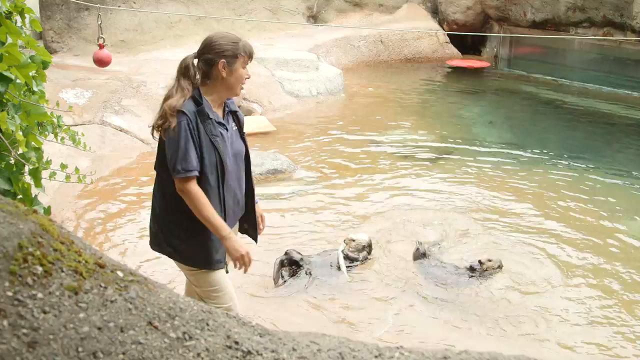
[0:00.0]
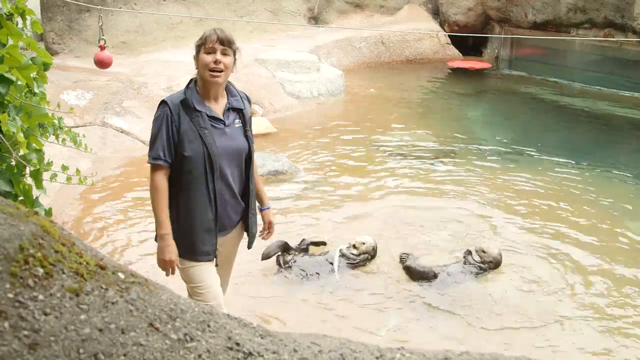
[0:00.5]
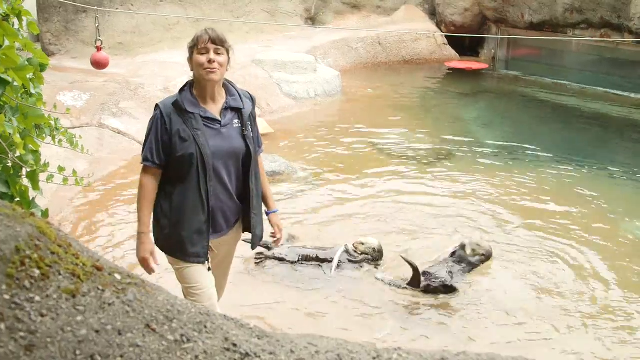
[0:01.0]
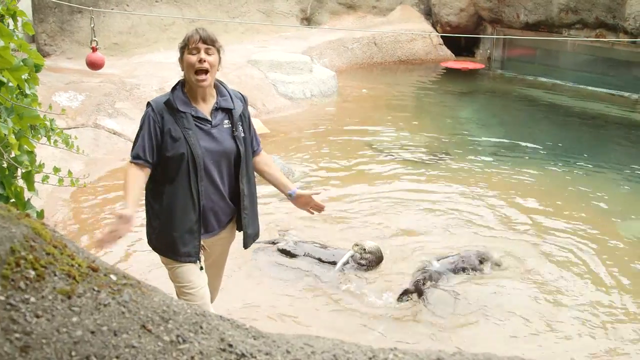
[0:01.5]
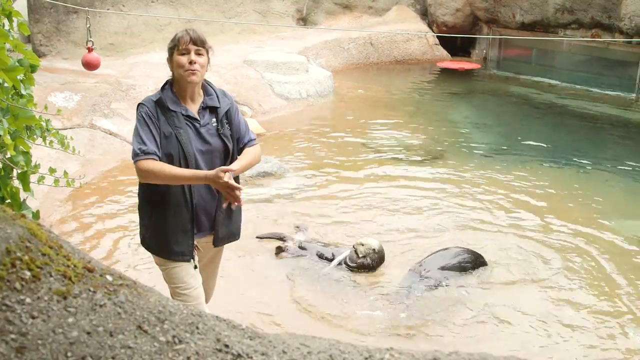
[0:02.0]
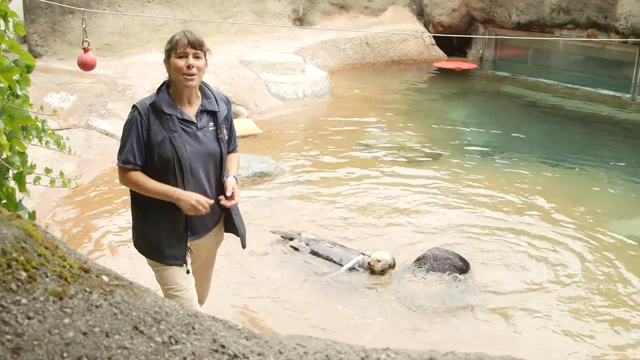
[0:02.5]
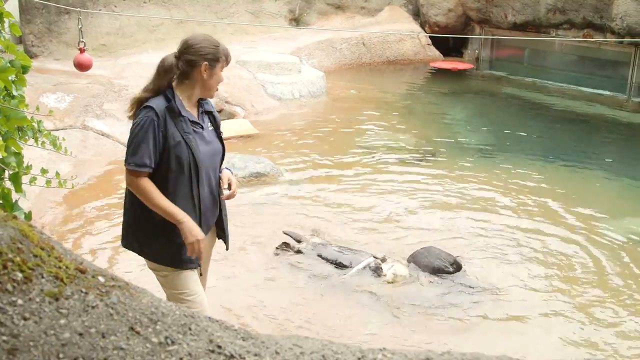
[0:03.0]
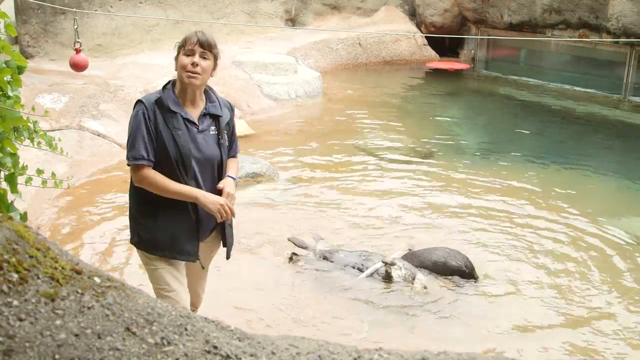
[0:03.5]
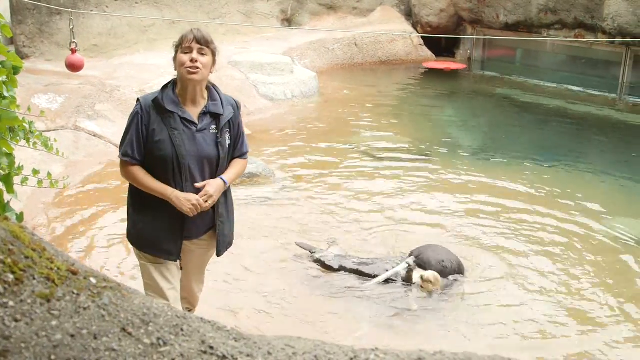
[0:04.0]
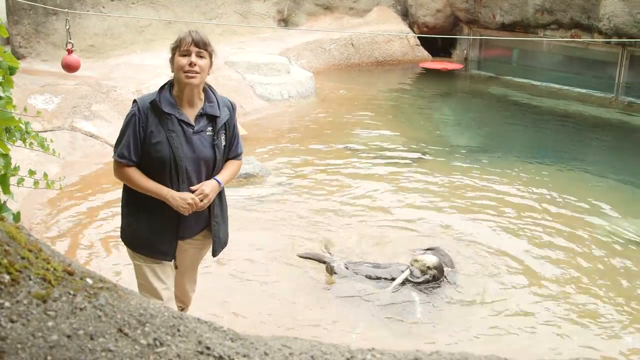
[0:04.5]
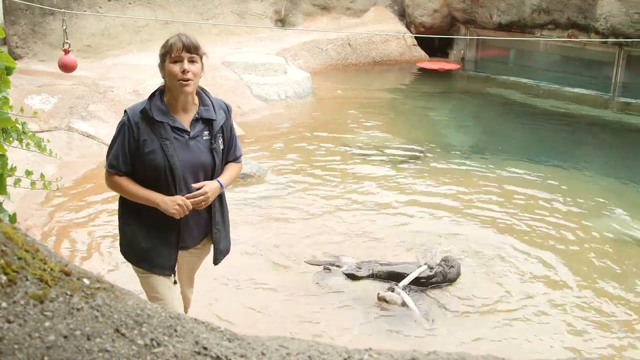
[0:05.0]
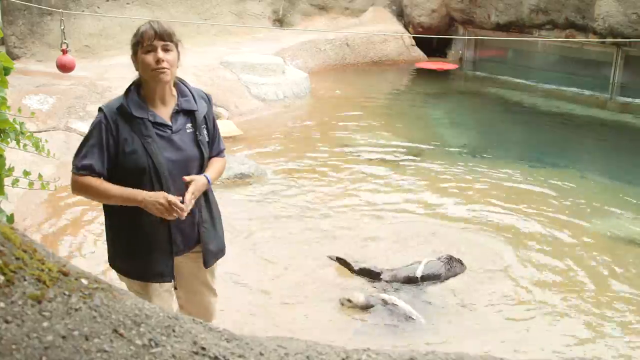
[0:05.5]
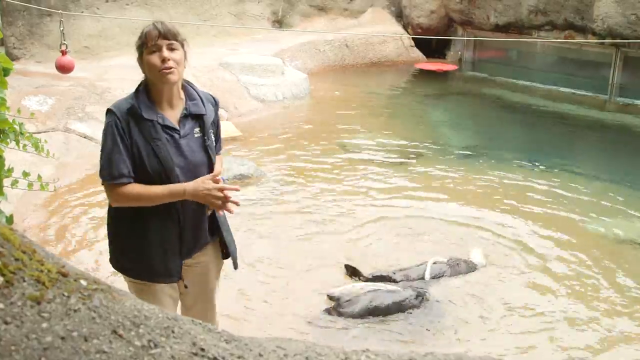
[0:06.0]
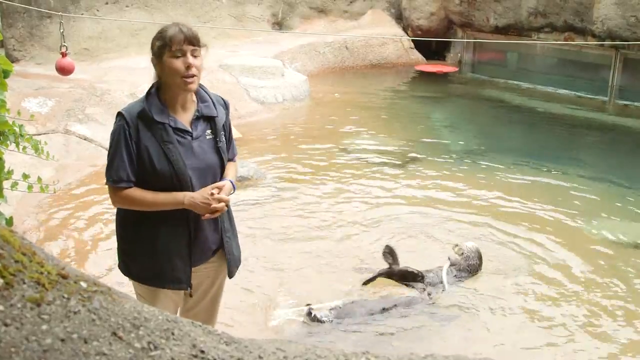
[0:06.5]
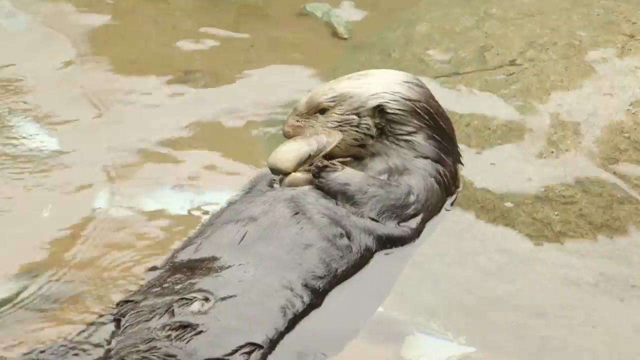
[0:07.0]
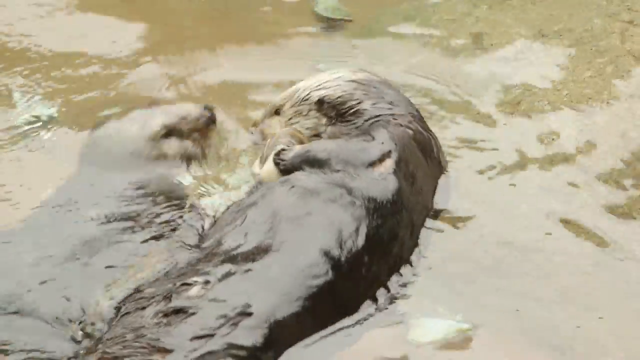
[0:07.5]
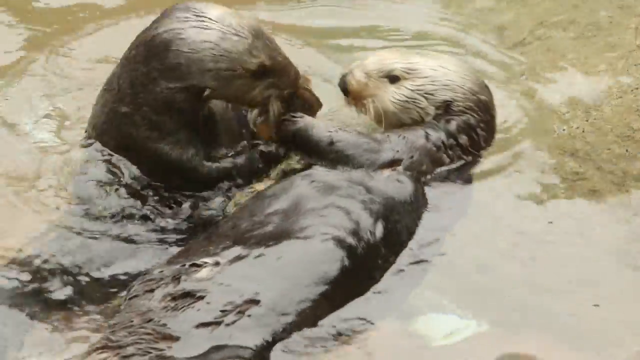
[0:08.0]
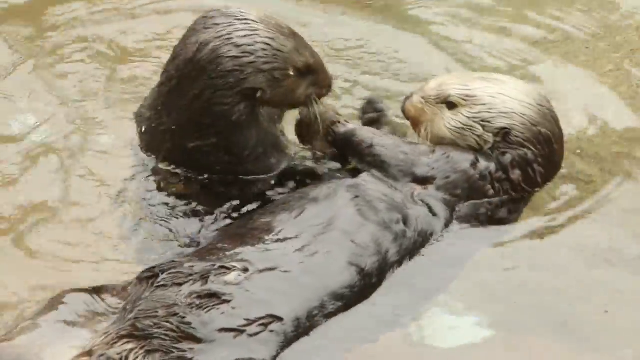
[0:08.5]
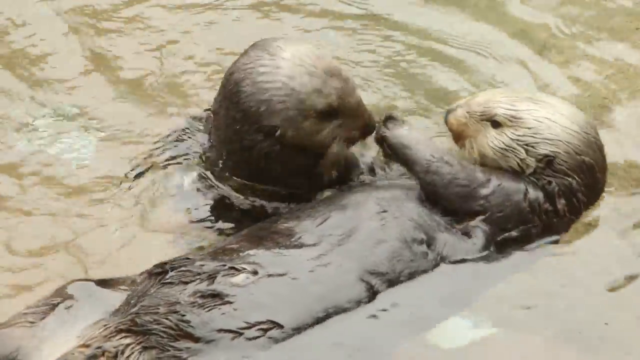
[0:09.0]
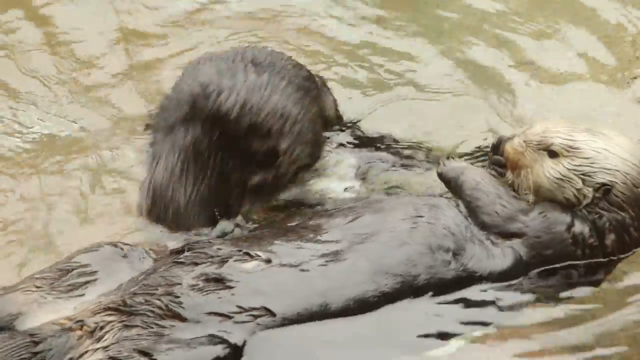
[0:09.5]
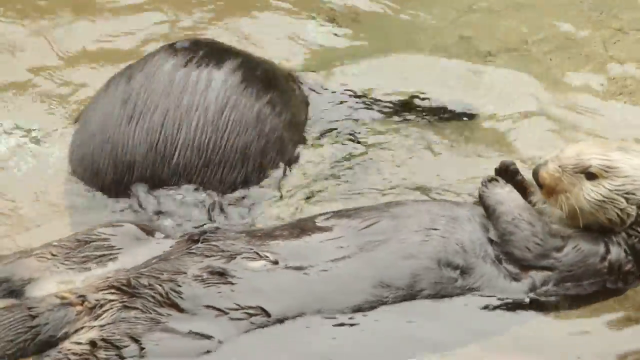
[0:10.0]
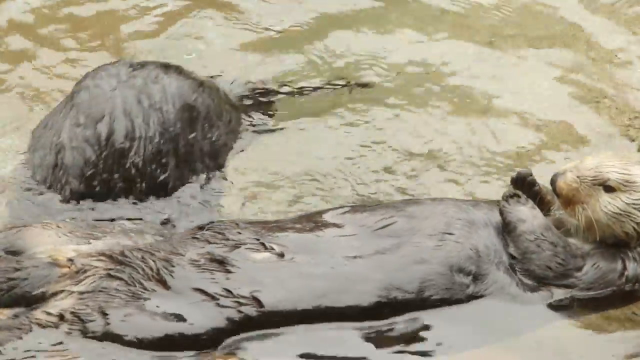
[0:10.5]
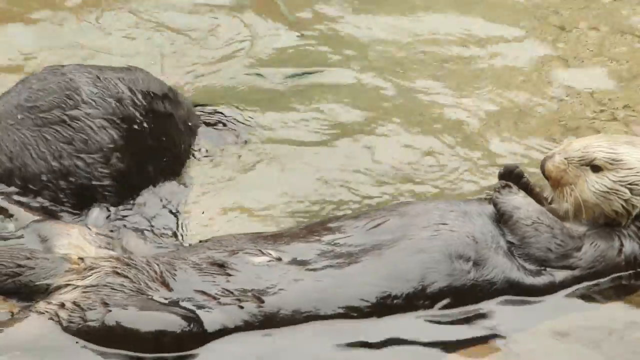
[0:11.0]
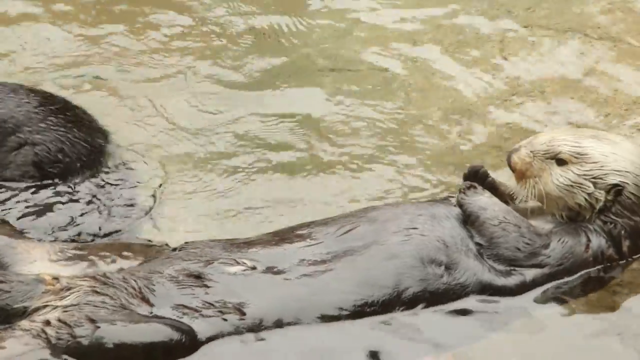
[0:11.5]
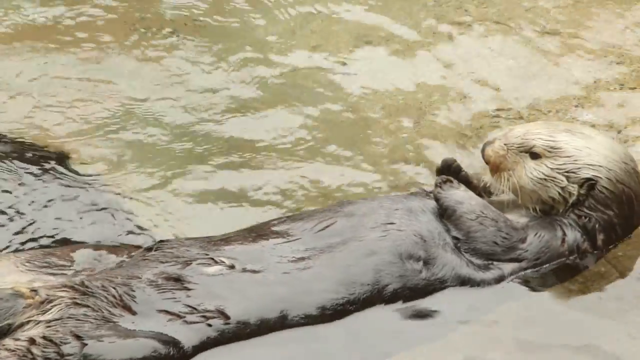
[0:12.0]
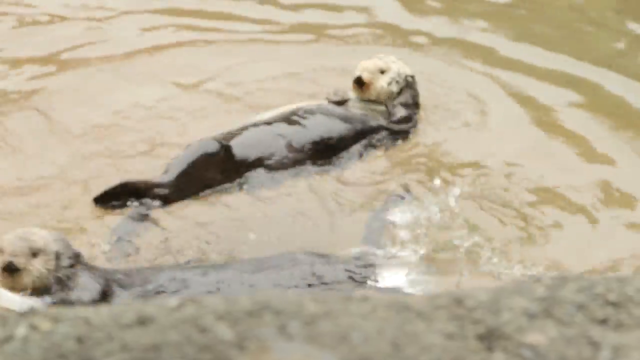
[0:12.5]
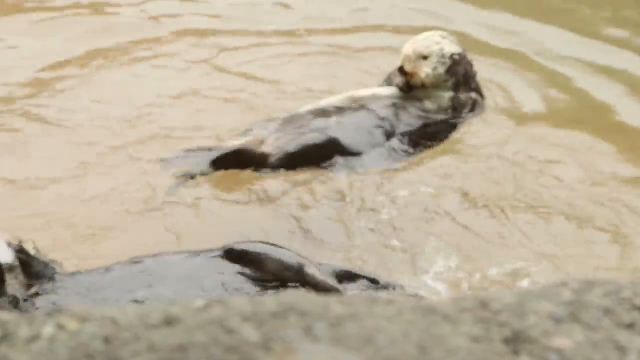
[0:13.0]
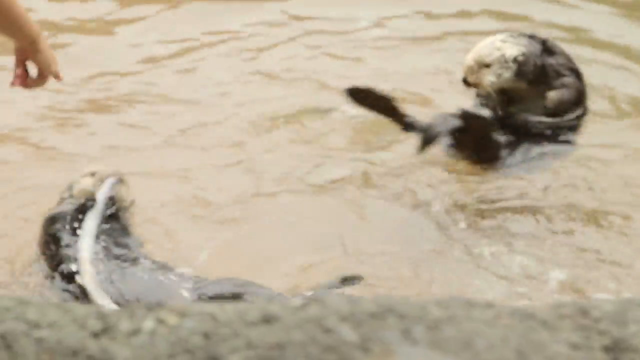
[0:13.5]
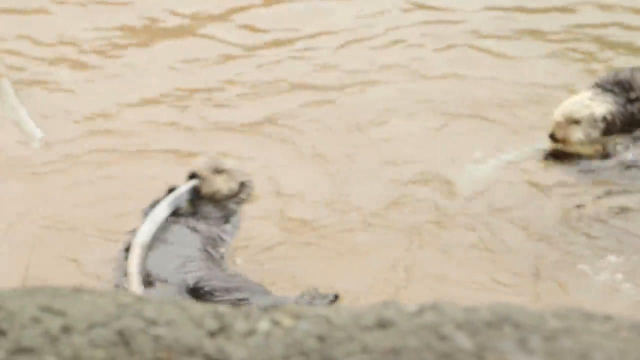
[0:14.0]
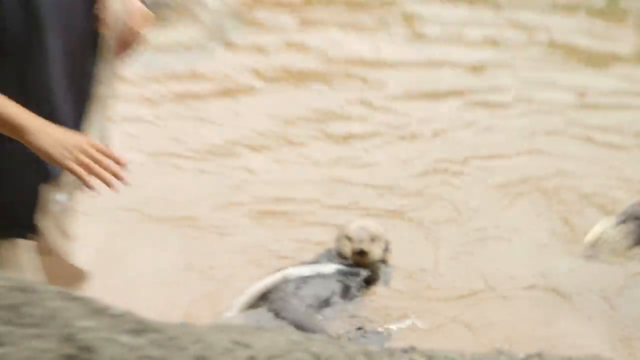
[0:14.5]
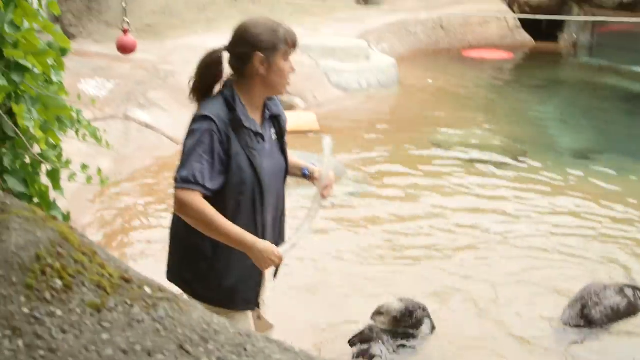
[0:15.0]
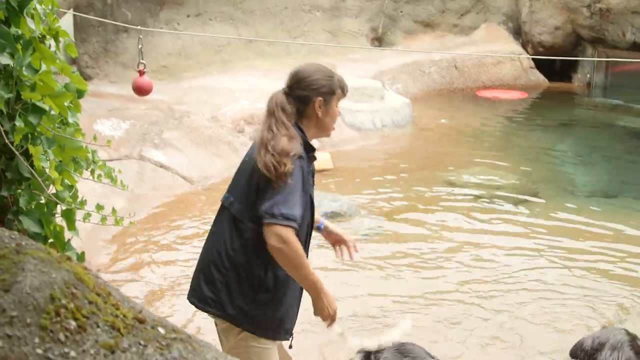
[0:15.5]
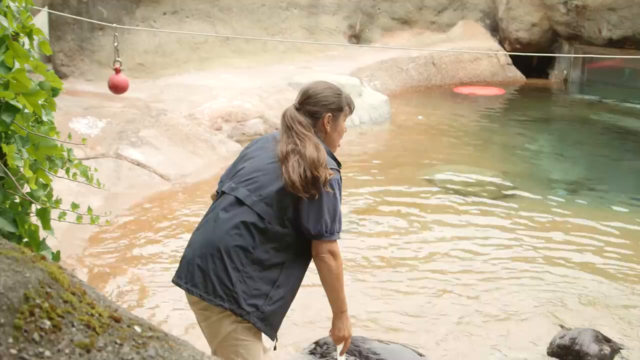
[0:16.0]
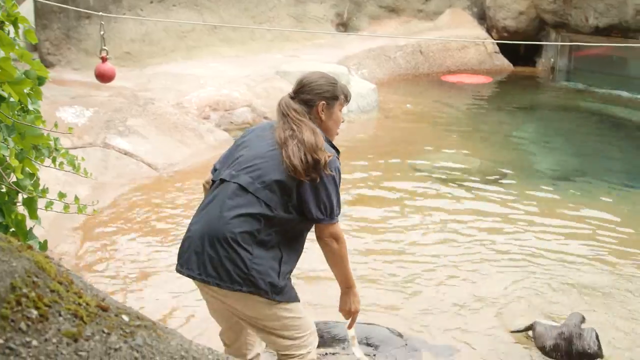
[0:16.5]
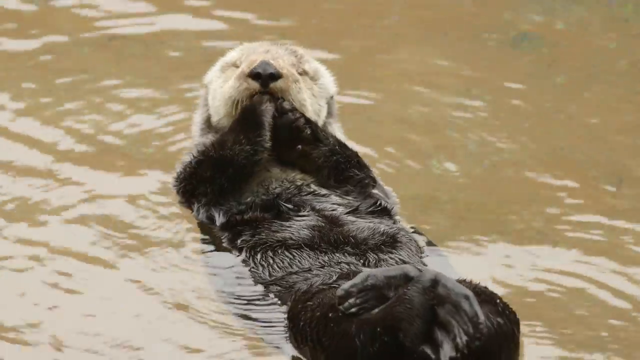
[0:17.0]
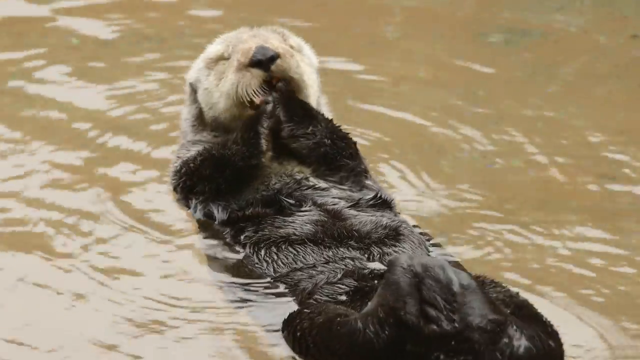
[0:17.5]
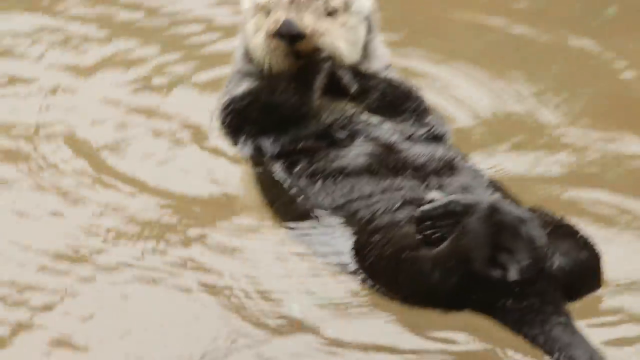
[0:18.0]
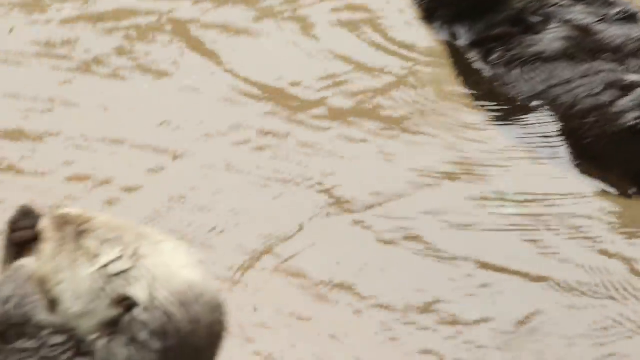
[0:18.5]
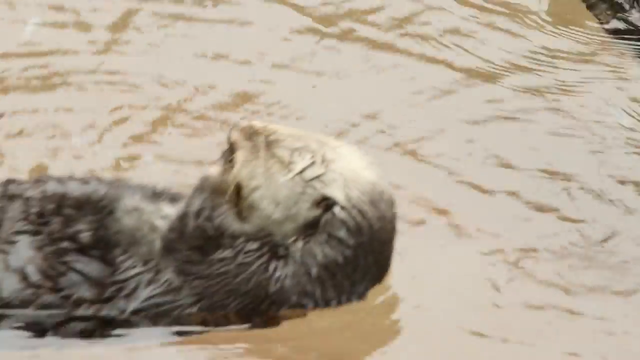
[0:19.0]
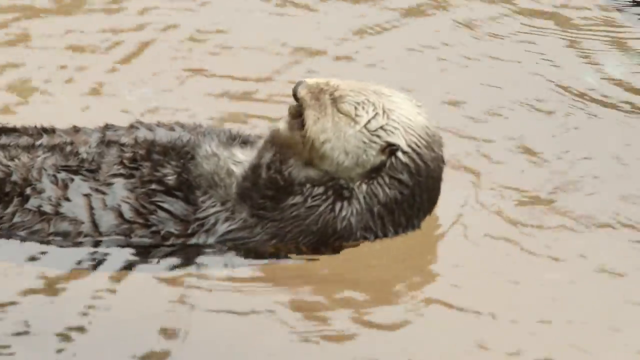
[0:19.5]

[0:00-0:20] A woman in a black jacket and yellow trousers stands in the water, talking. Beside her is colored water, and a group of otters lie in the water. There are plants on her back. The otters play in the water as it discolors, turning from green to blue, and the shot focuses on them. The woman claps her hands together as she focuses on the otters. The otters look like they are eating something, then play in the water, turning it brown, and the woman looks like she is sharing some food with them. In the background is a water source, a rock with some red bolts hangs above her head, and there is a tree beside her.